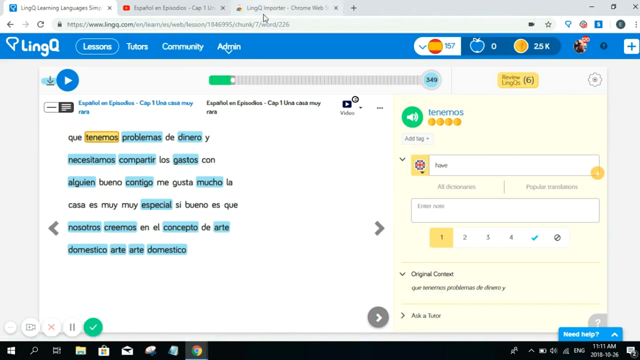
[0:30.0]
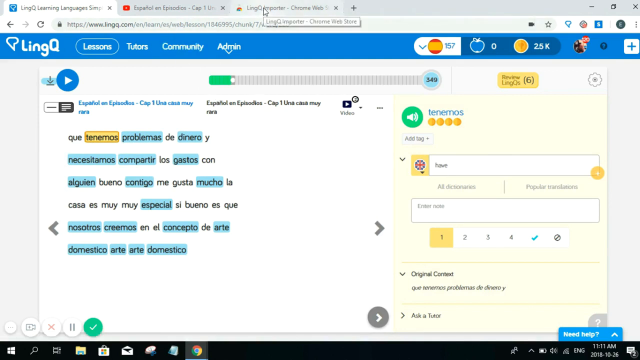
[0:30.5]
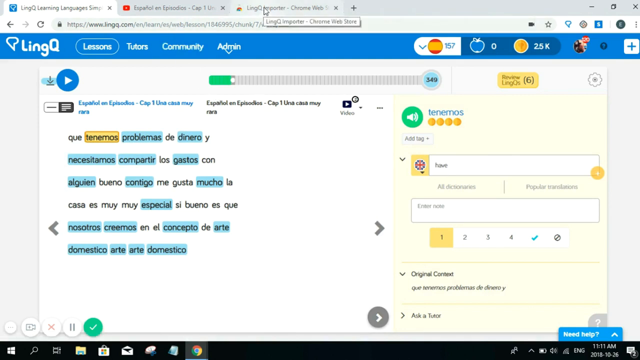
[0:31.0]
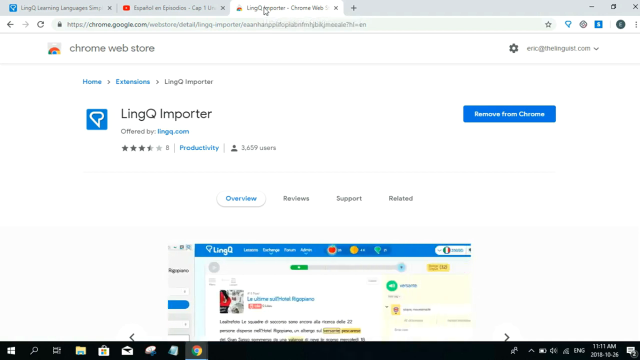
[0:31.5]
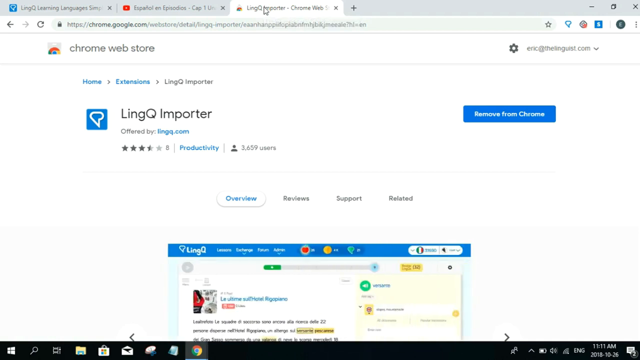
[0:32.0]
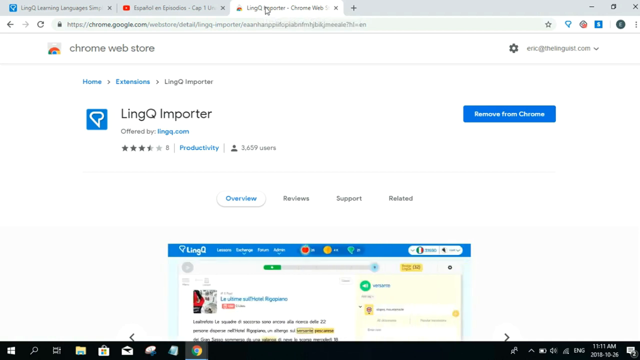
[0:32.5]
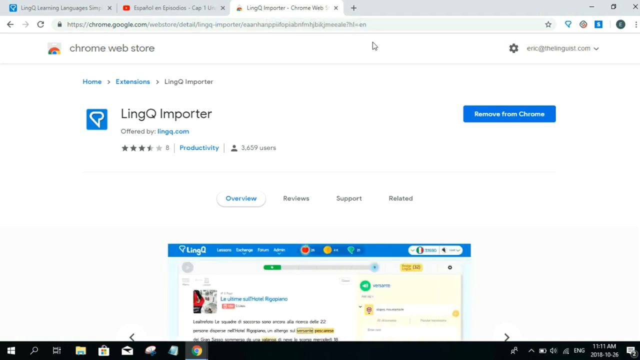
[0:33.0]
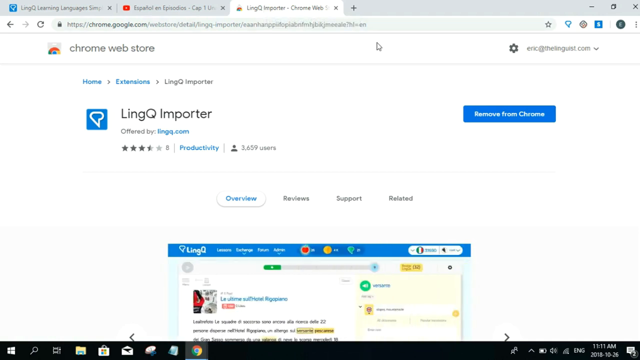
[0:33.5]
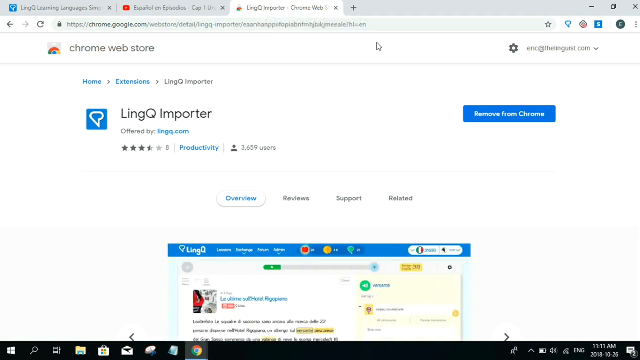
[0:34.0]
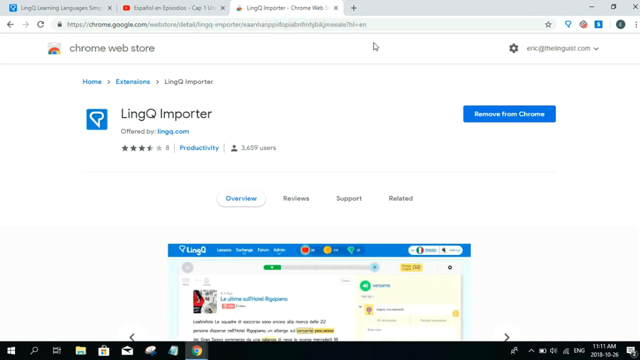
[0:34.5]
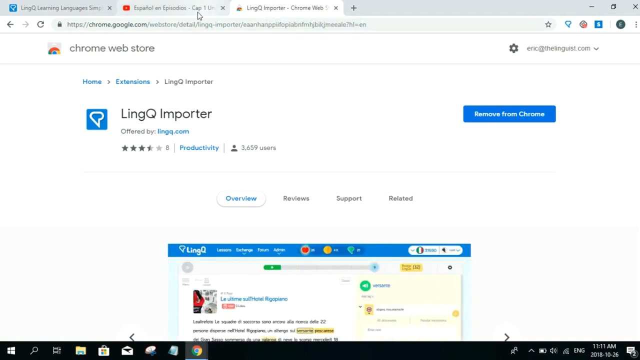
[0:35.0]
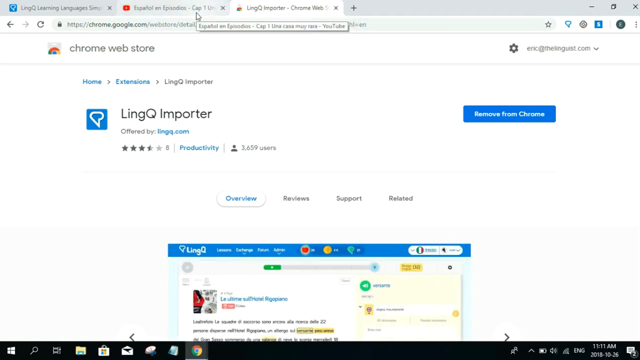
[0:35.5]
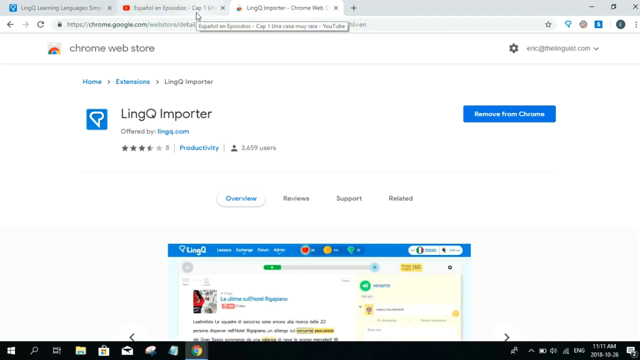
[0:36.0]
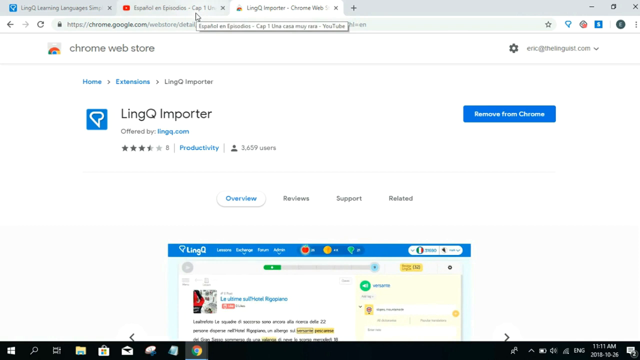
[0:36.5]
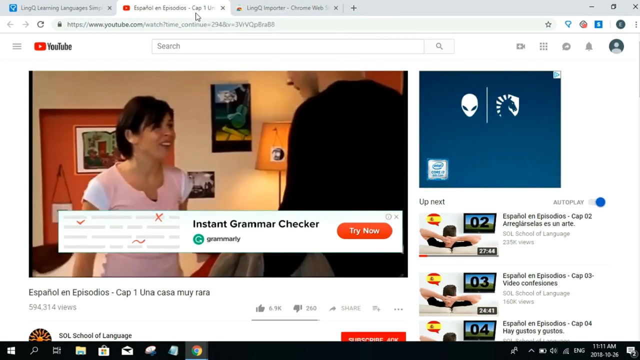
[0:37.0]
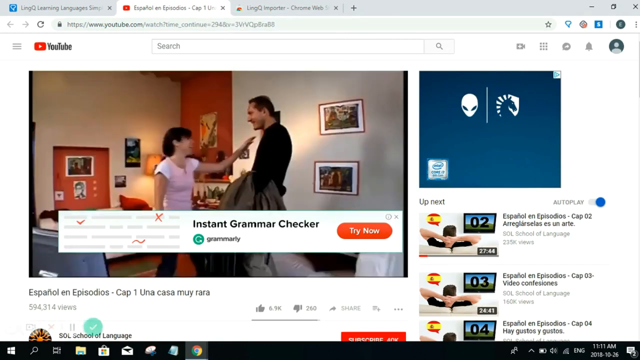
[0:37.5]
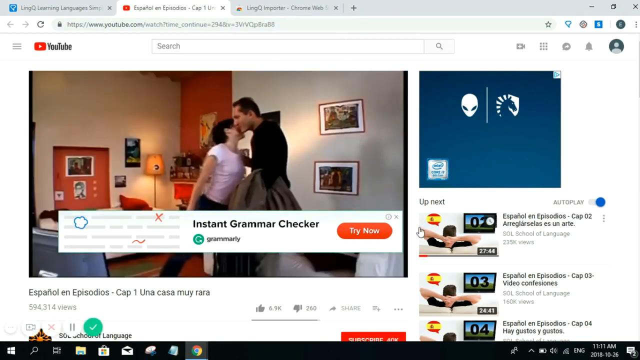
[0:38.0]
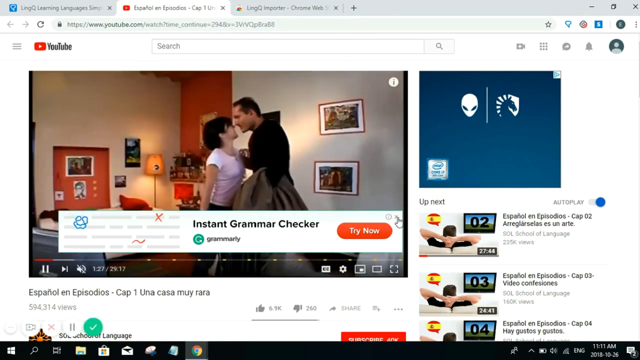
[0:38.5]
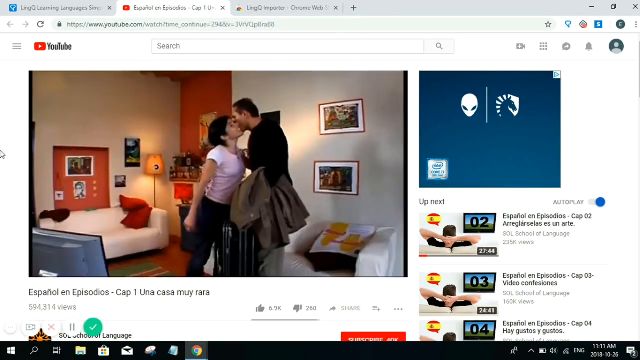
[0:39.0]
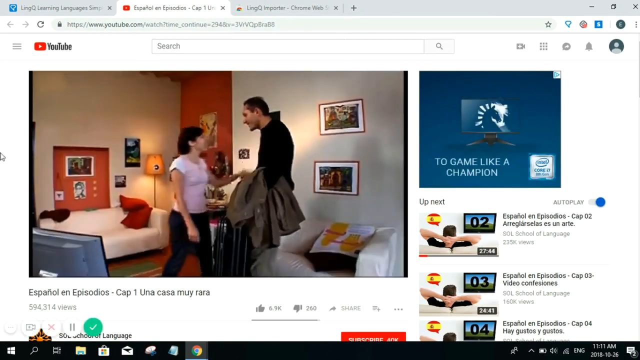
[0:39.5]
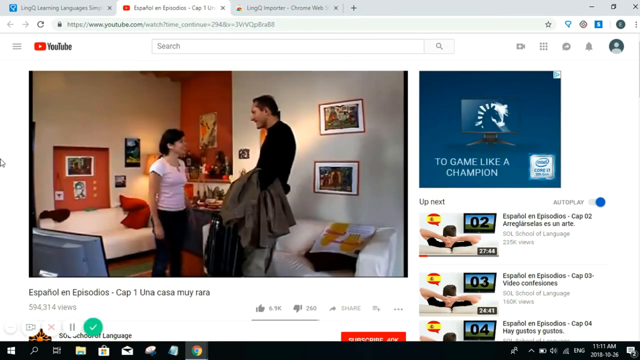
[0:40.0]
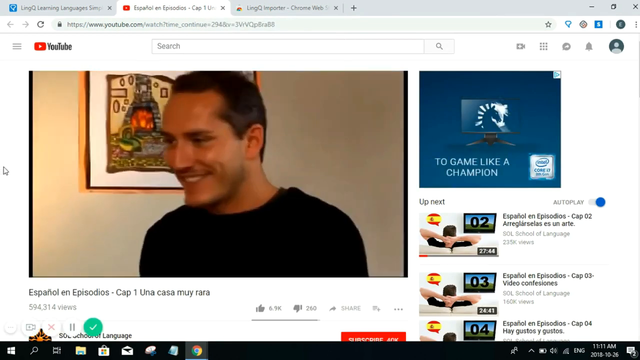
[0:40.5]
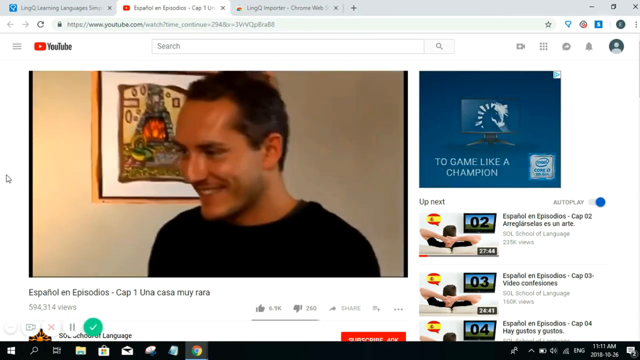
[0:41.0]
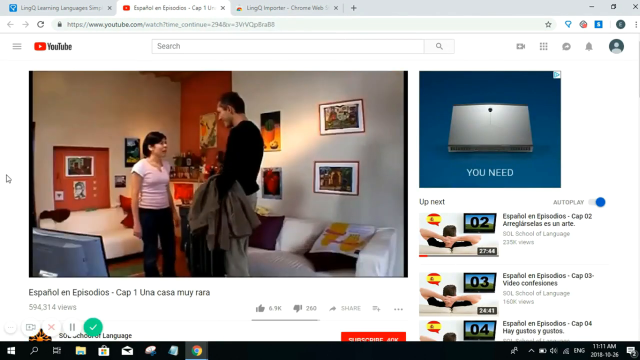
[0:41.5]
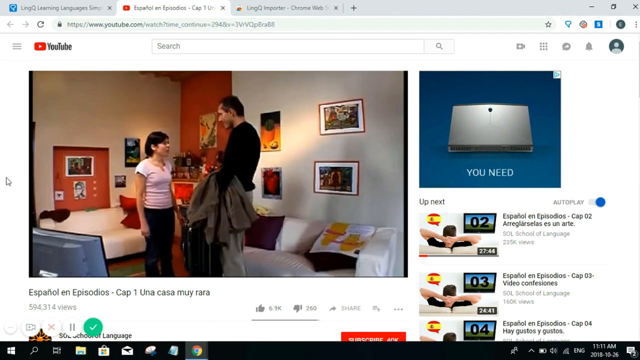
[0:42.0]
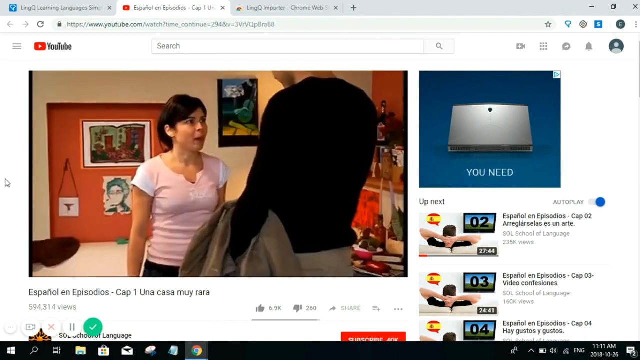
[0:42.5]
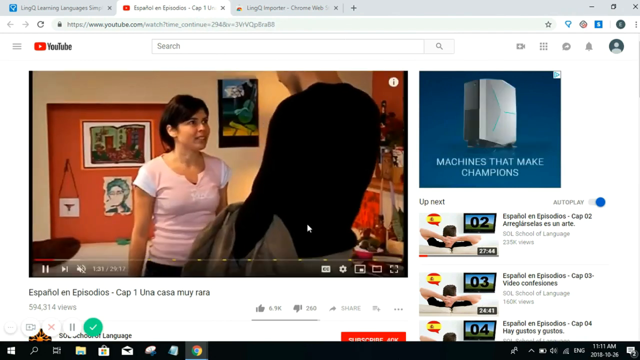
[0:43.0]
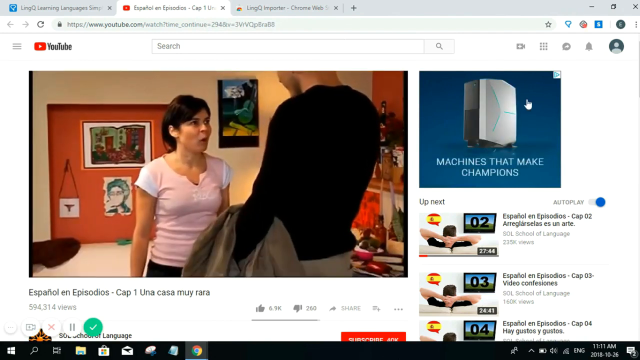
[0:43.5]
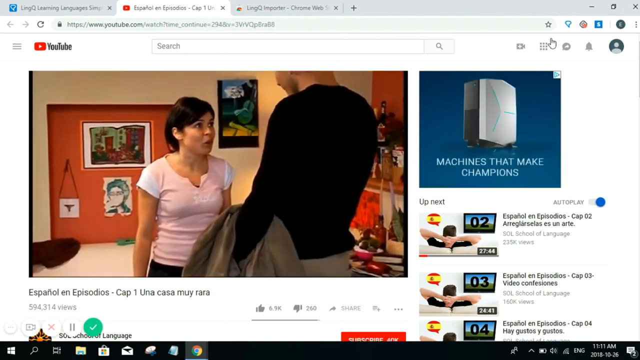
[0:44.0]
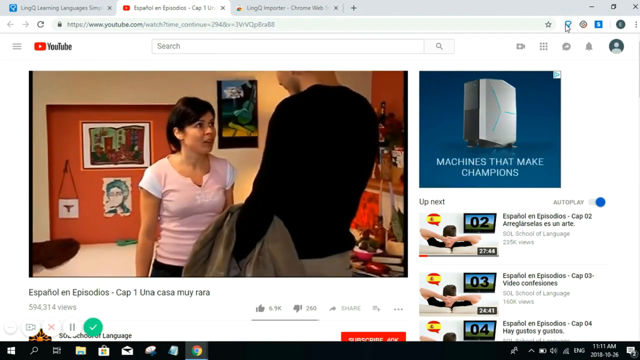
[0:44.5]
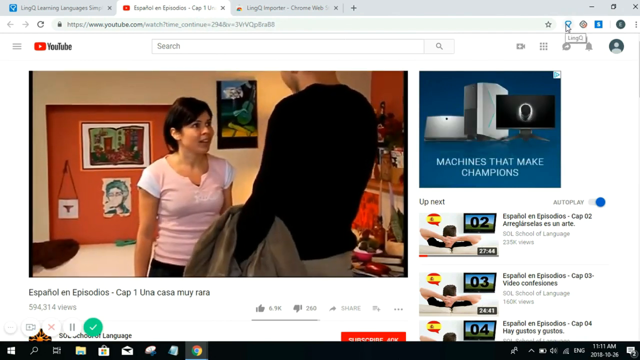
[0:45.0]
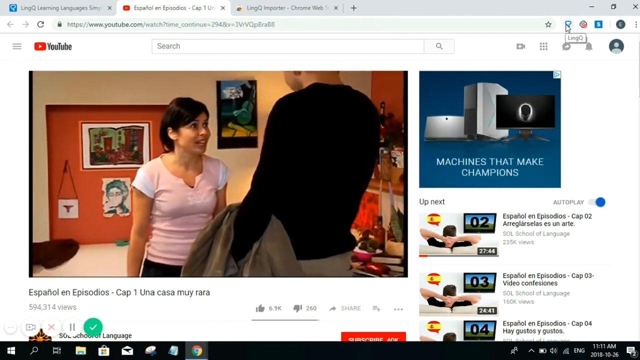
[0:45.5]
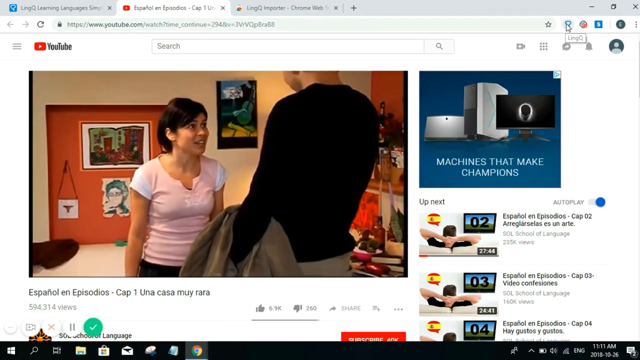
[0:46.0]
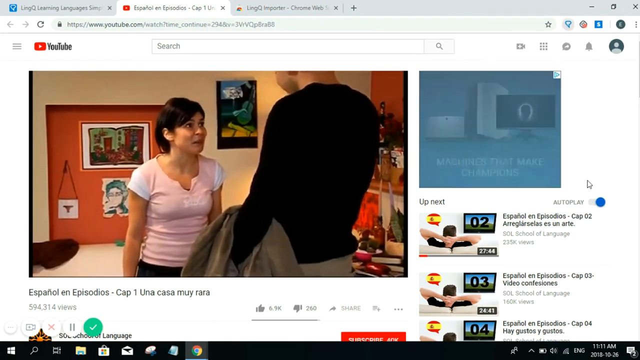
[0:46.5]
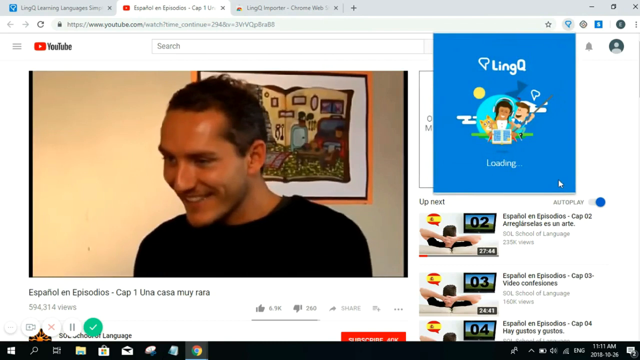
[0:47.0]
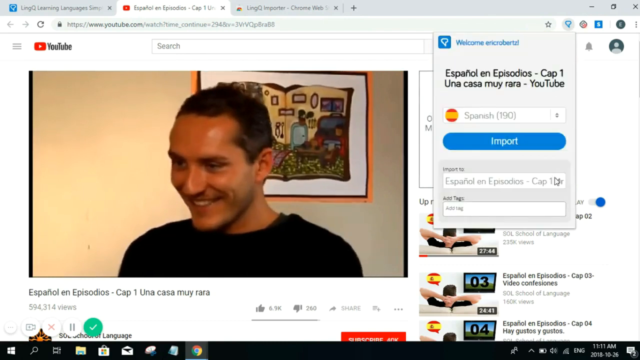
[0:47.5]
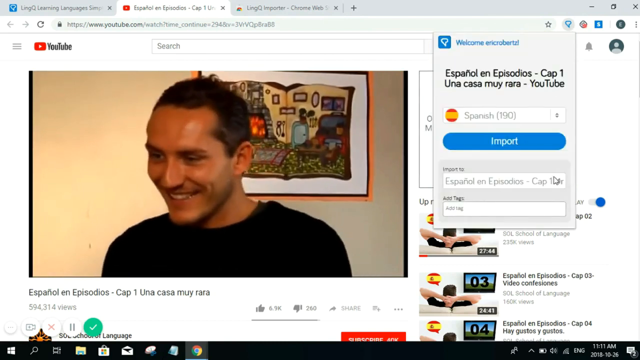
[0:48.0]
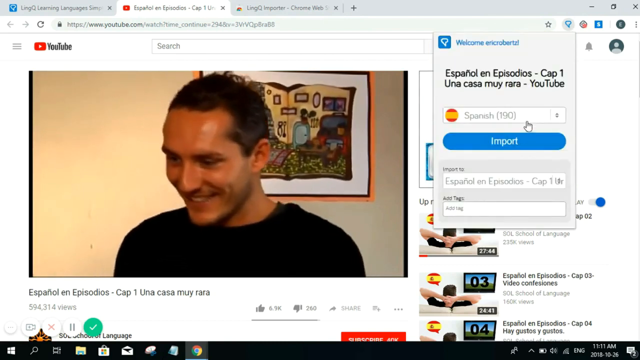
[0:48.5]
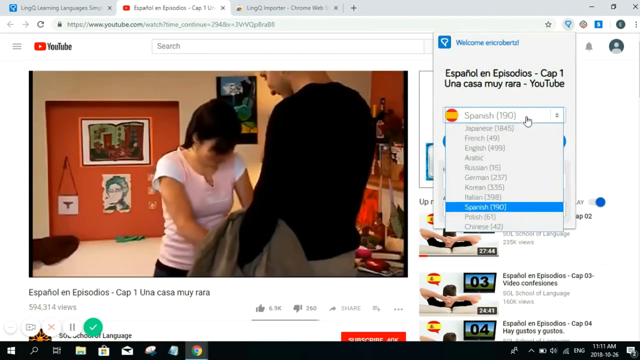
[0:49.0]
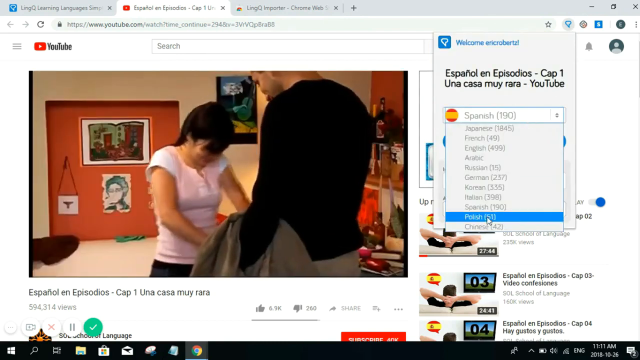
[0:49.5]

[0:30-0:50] The person switches to the other tab, the Lingq importer, and then goes to the YouTube tab, where some sort of TV show in Spanish, possibly a sitcom, is playing. He watches the video for a little while; more episodes are in the queue to play next. He then goes to the Lingq shortcut on his browser bar and returns to the Lingq tab with the paragraph written in Spanish, where he just moves the cursor around.